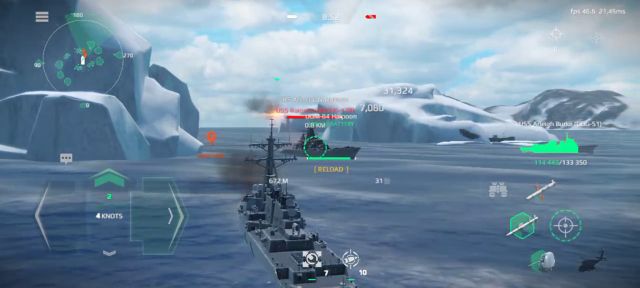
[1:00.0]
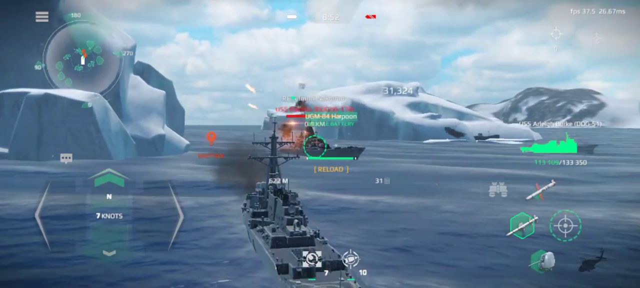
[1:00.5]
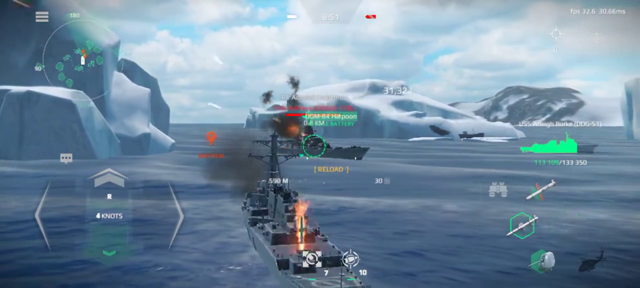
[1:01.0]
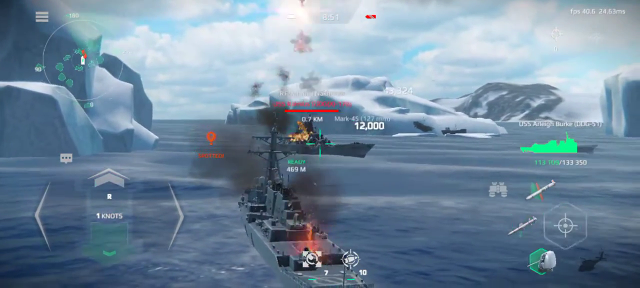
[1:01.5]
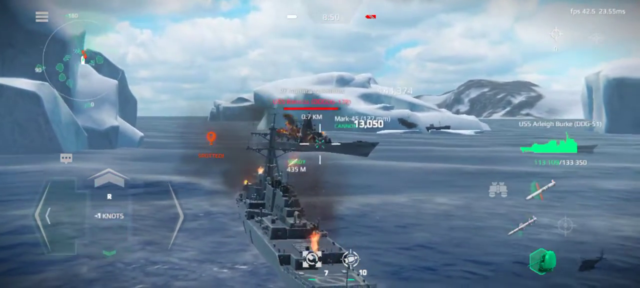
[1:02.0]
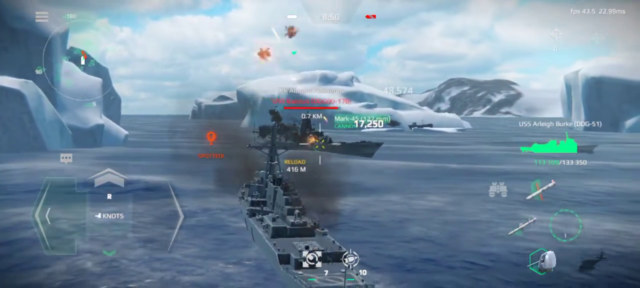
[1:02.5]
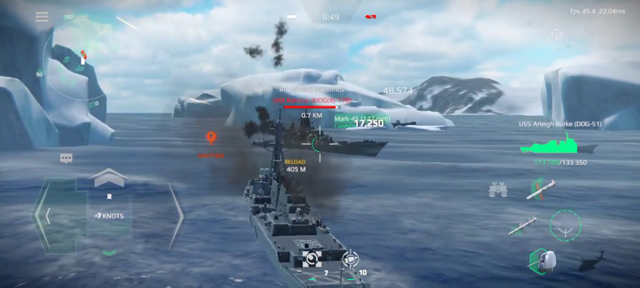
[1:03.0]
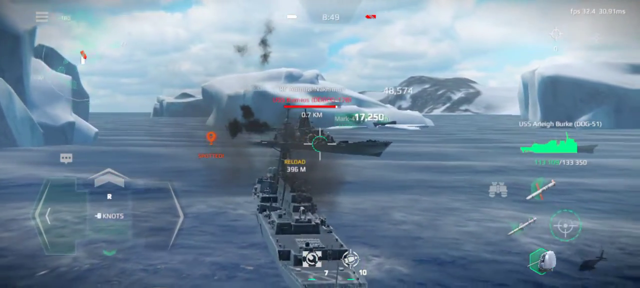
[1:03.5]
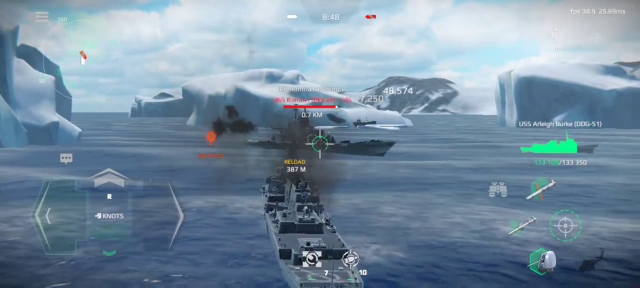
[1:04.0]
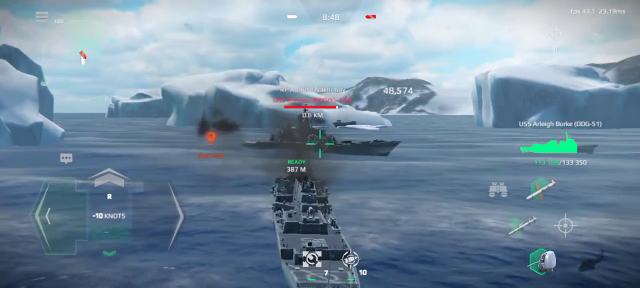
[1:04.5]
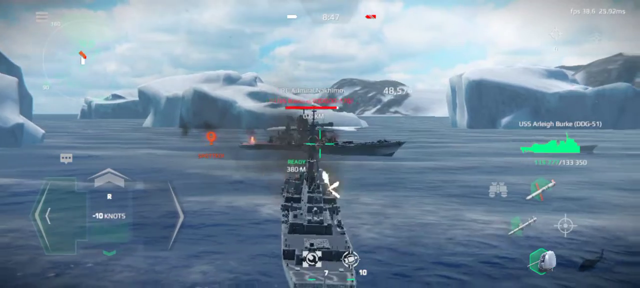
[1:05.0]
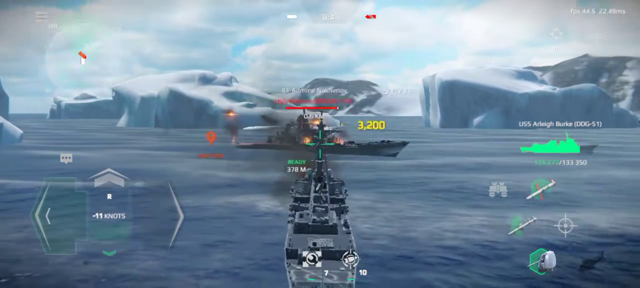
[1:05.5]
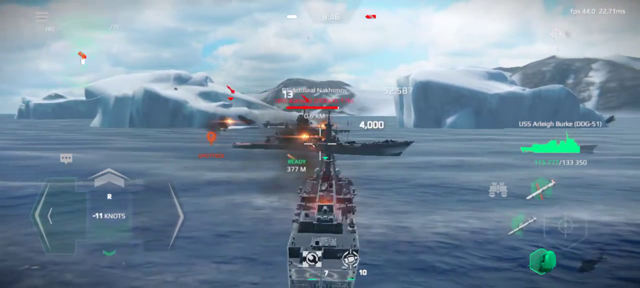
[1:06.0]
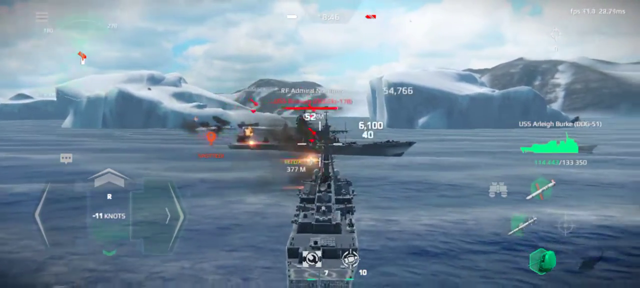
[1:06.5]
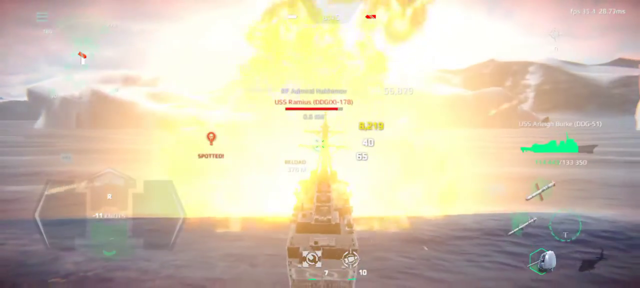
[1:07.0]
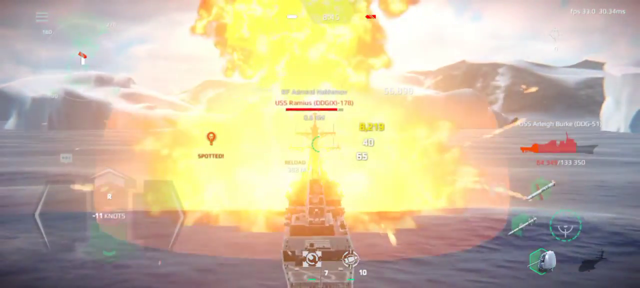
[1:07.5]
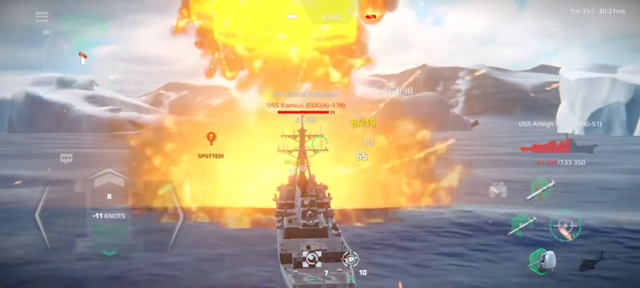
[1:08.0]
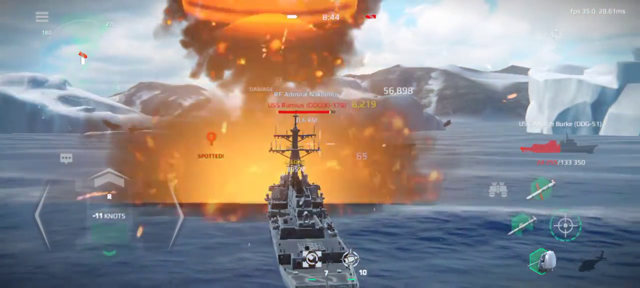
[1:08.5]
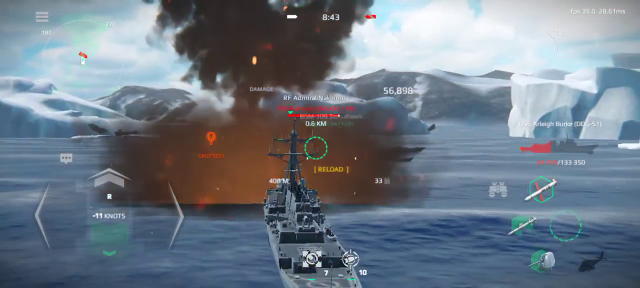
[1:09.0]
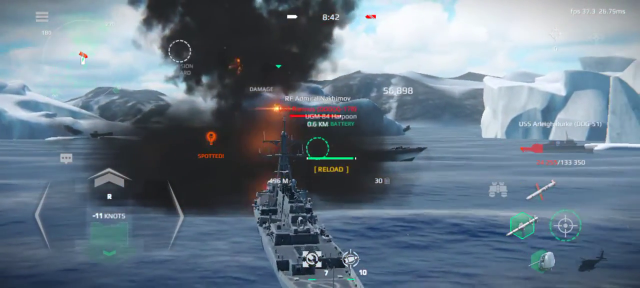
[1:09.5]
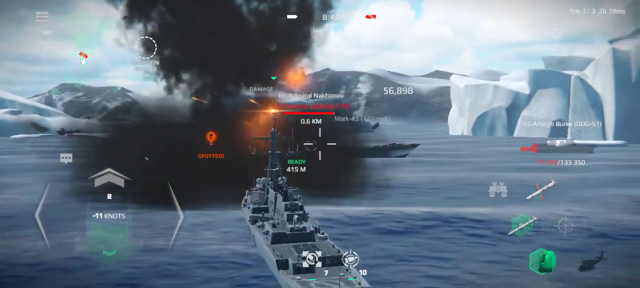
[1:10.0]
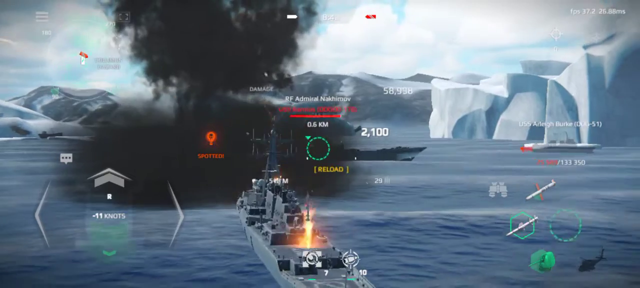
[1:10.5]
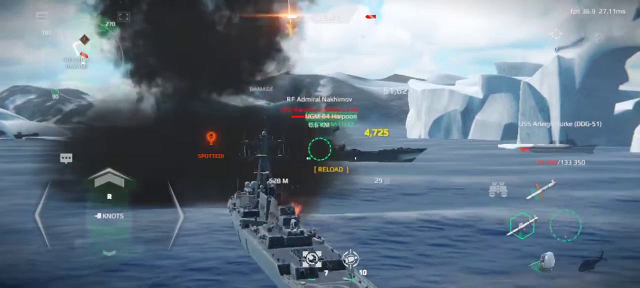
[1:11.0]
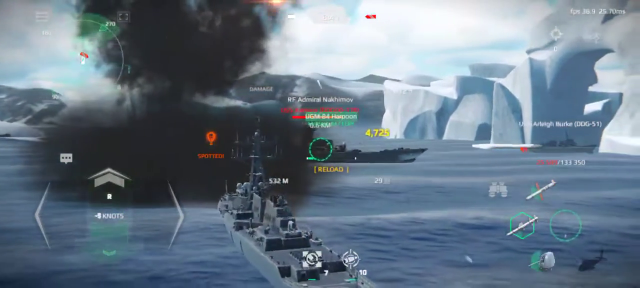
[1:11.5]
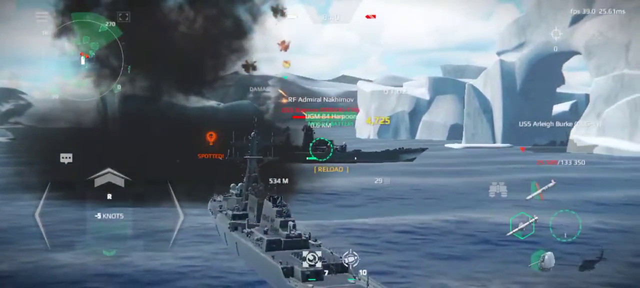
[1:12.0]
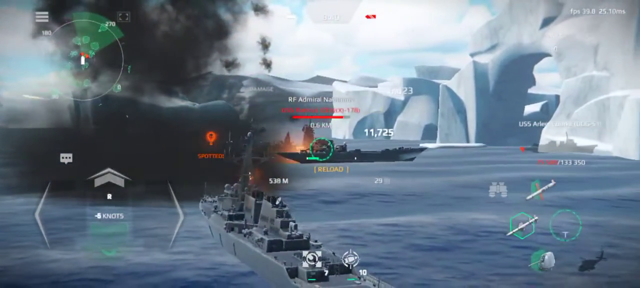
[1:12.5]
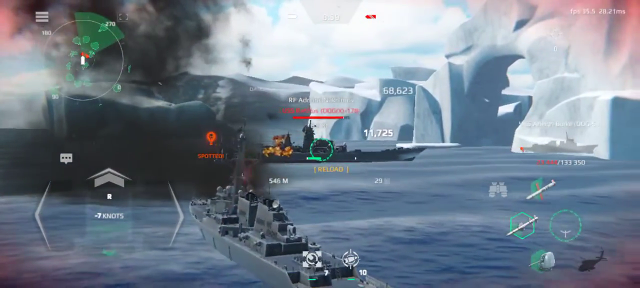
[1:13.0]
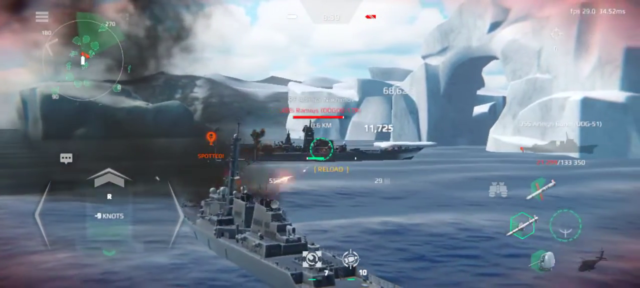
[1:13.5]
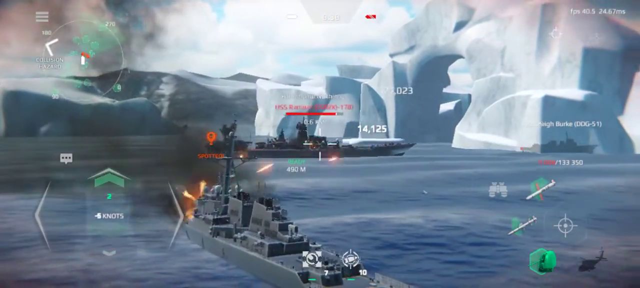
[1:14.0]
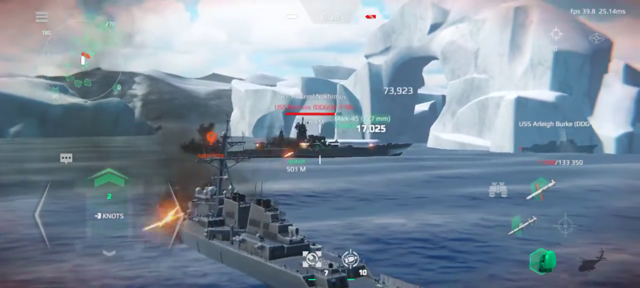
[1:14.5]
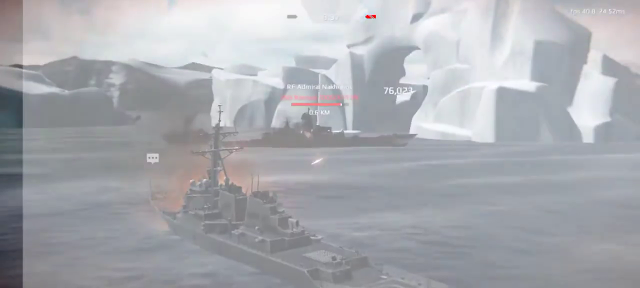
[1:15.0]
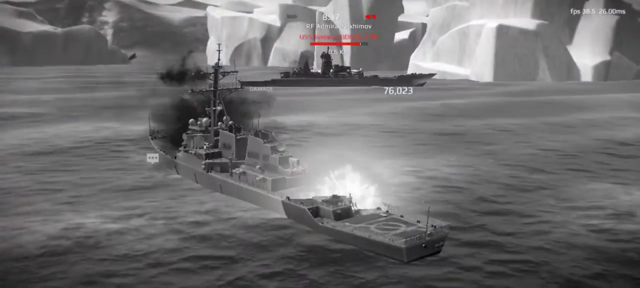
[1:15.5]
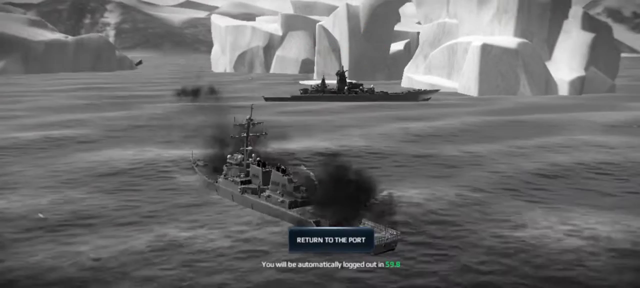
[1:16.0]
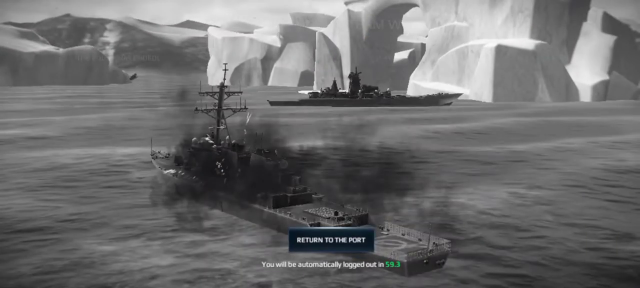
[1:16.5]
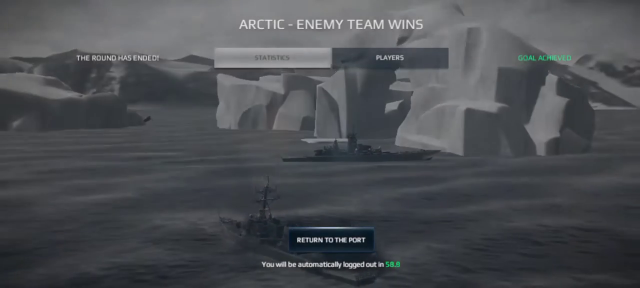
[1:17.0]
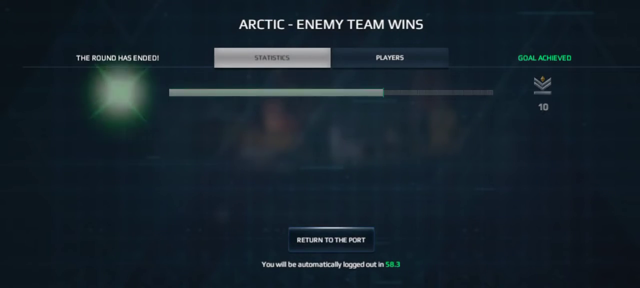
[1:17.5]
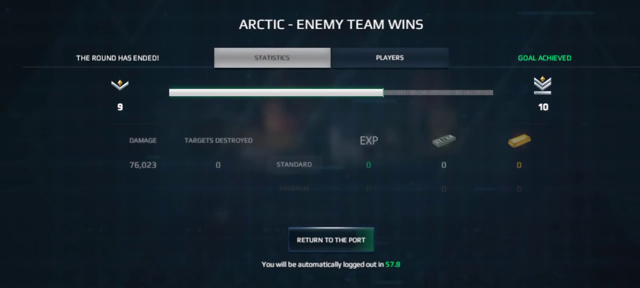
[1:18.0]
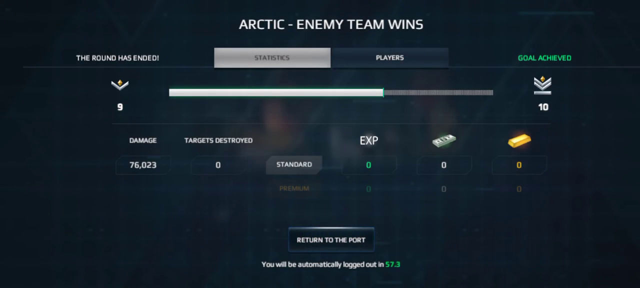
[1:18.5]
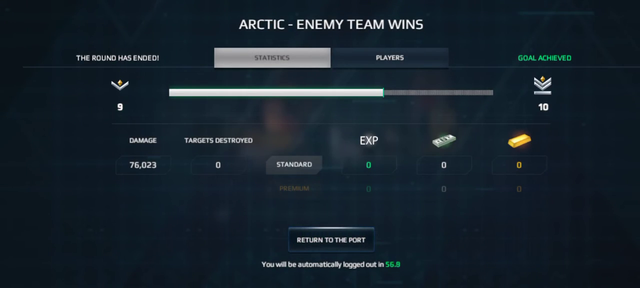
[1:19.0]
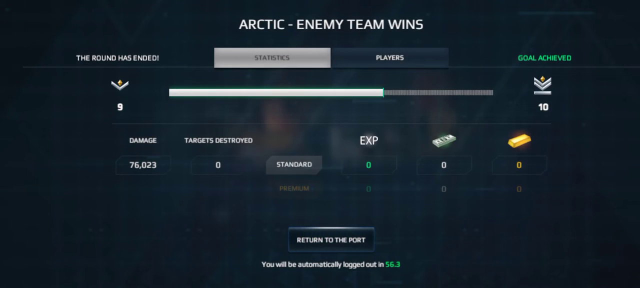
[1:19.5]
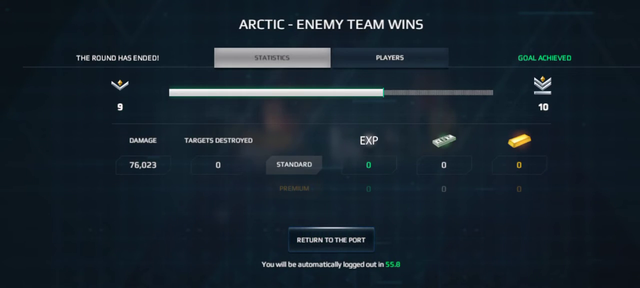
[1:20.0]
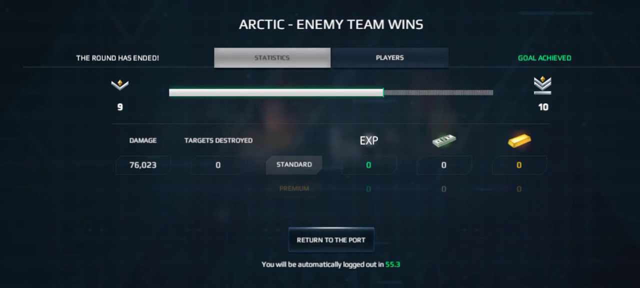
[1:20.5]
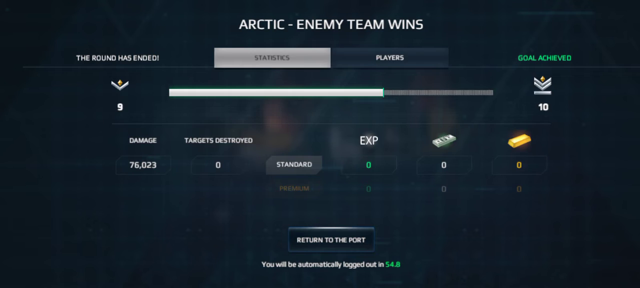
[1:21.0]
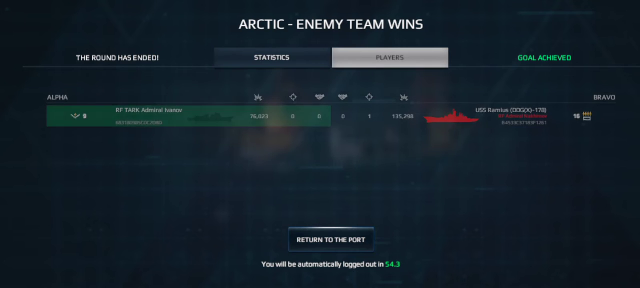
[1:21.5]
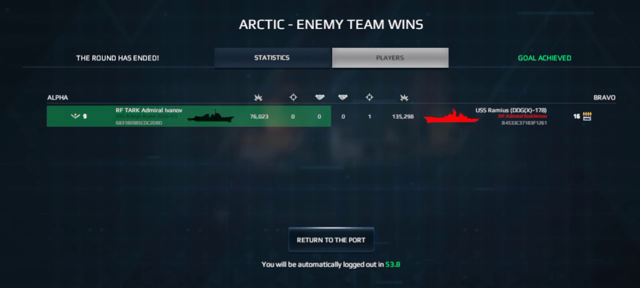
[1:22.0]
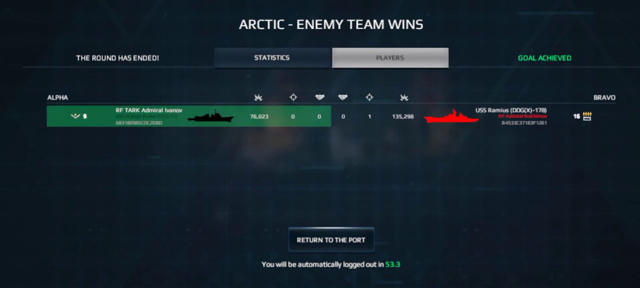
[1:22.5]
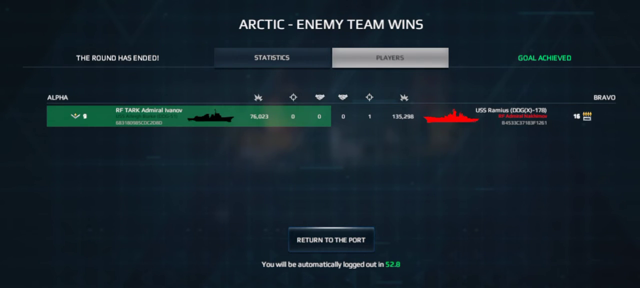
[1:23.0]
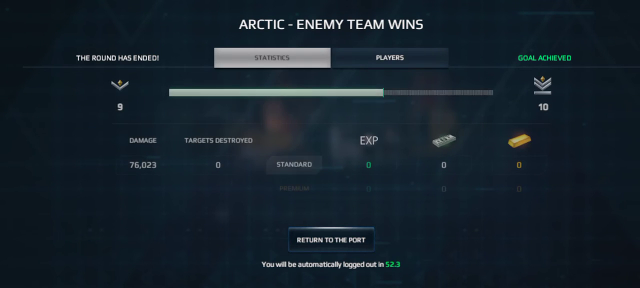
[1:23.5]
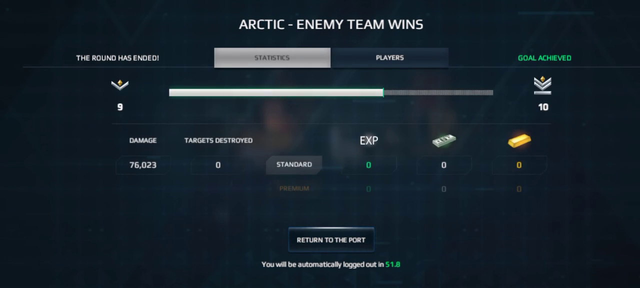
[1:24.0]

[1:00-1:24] The game takes place in an ocean that looks arctic, with glaciers to the right, the left and in the background. The fight continues: the user-controlled ship is sort of backing up, and the NPC-controlled ship is sort of engulfed in flames. An overlay on the right-hand side appears to show the ship, with part of it red, presumably indicating the life being taken away from the ship as it is struck by missiles. Rockets and missiles fly from the controlled ship, and missiles are shot at the controlled ship from the NPC ship. The video then looks like it ends, with text saying "enemy team wins".